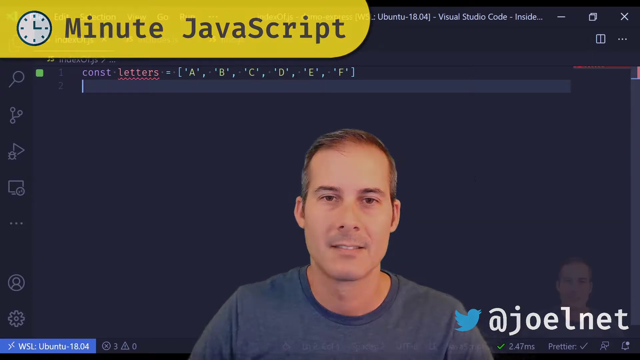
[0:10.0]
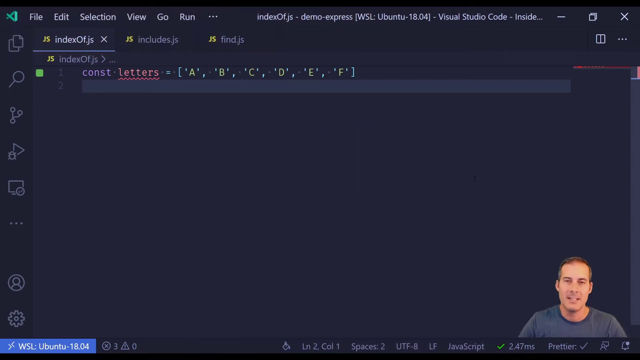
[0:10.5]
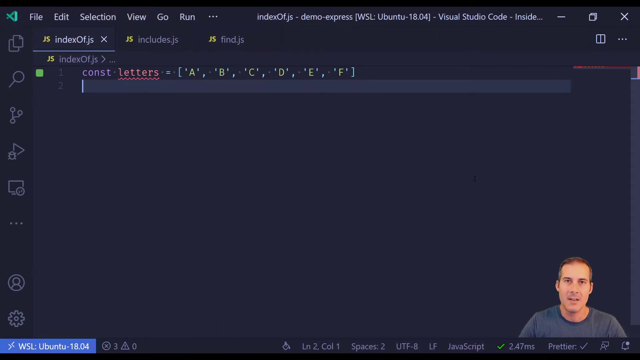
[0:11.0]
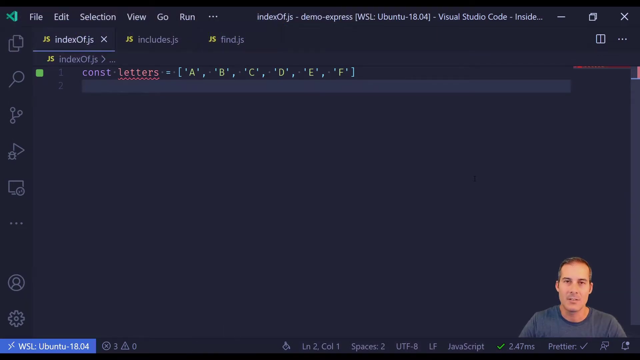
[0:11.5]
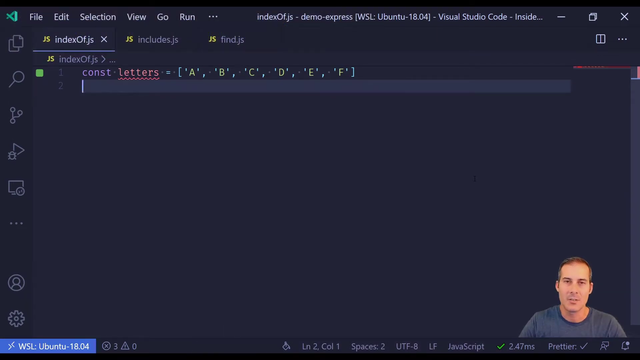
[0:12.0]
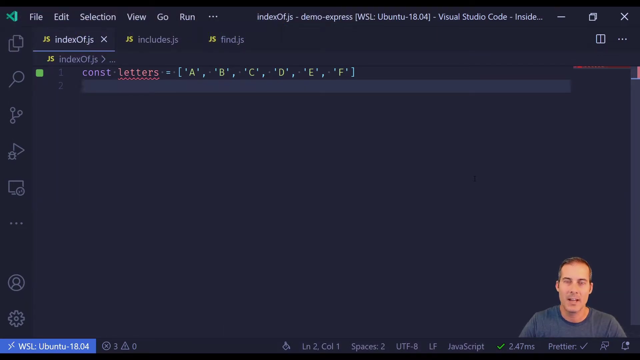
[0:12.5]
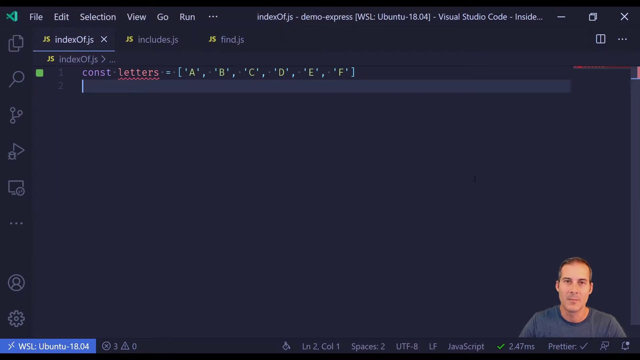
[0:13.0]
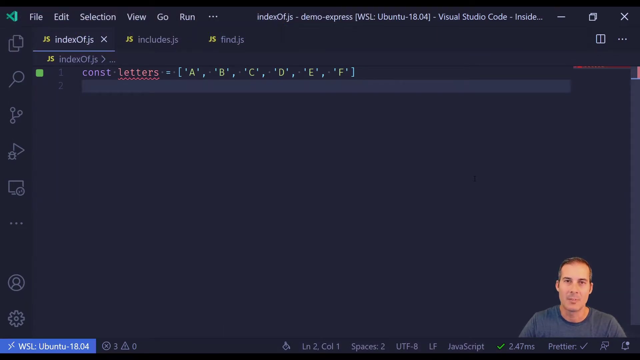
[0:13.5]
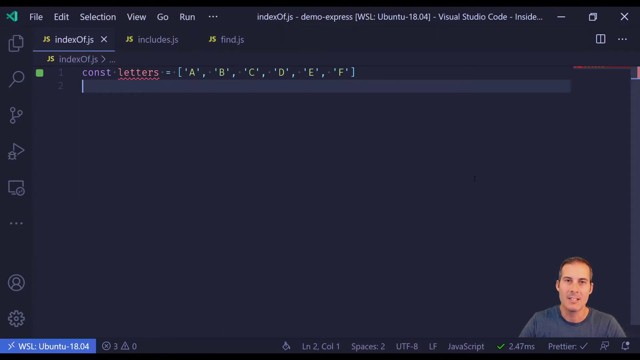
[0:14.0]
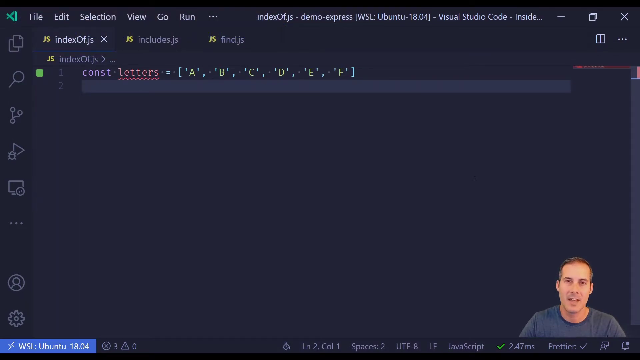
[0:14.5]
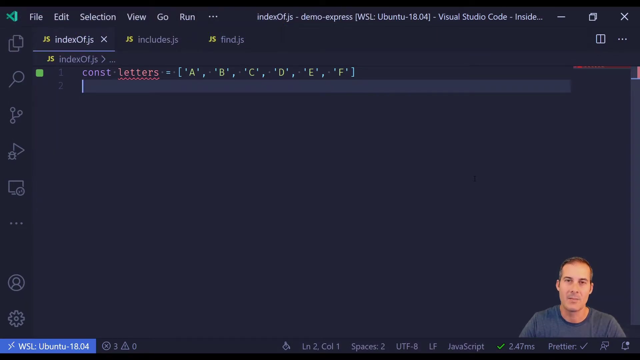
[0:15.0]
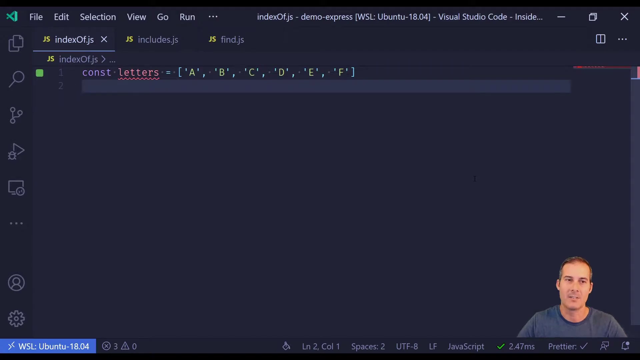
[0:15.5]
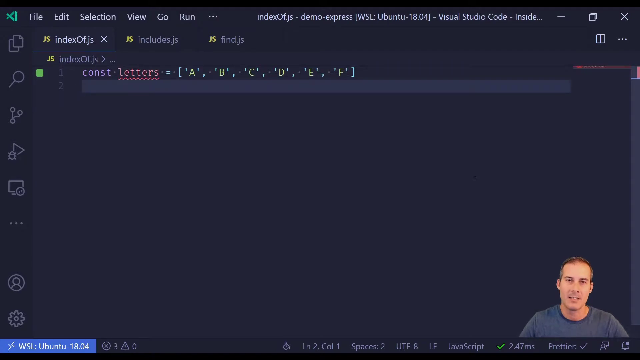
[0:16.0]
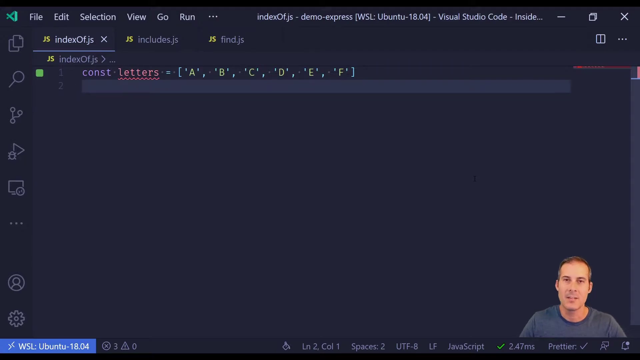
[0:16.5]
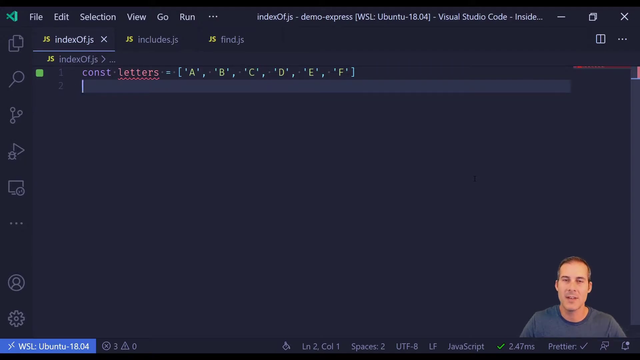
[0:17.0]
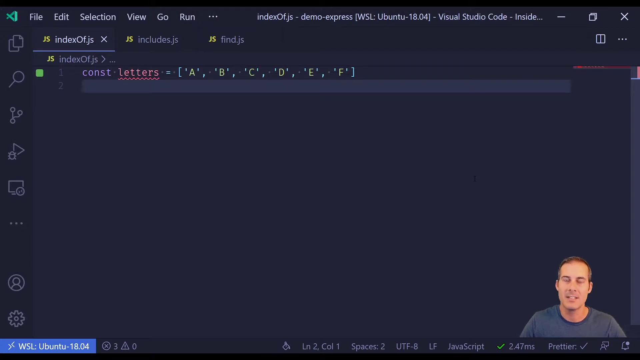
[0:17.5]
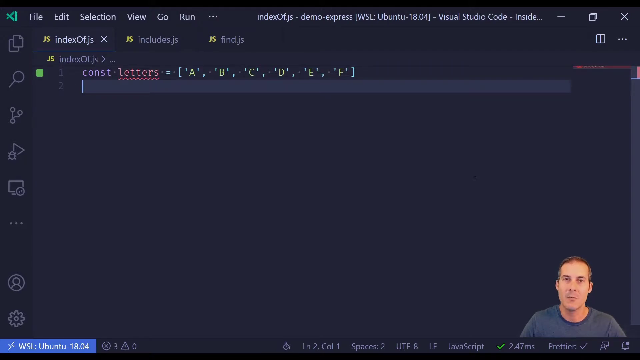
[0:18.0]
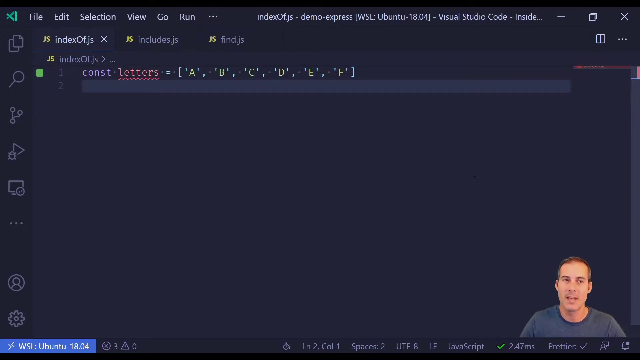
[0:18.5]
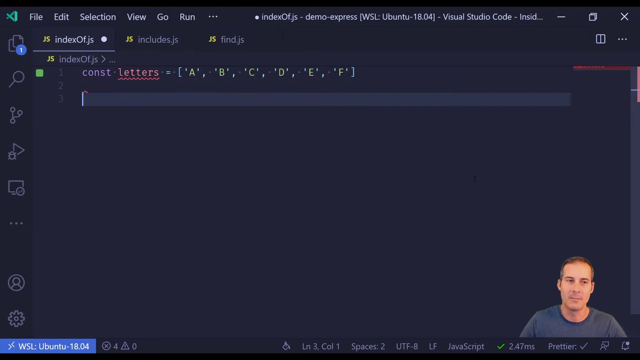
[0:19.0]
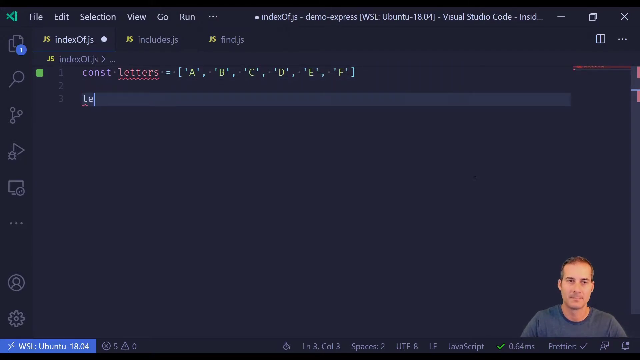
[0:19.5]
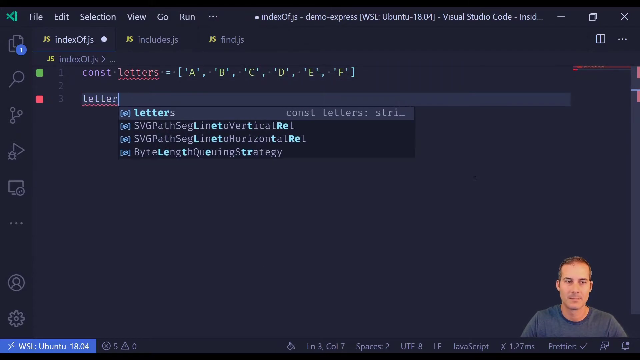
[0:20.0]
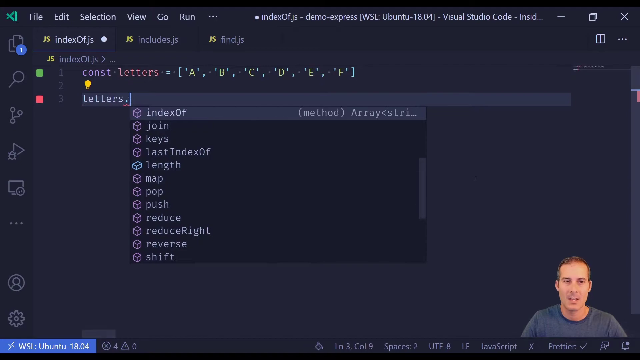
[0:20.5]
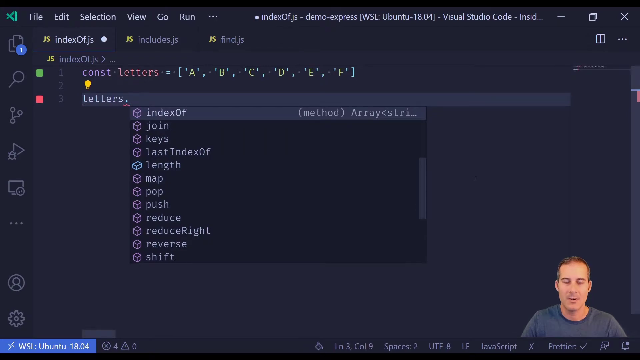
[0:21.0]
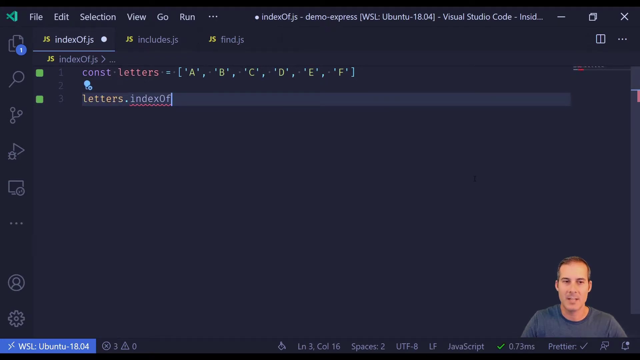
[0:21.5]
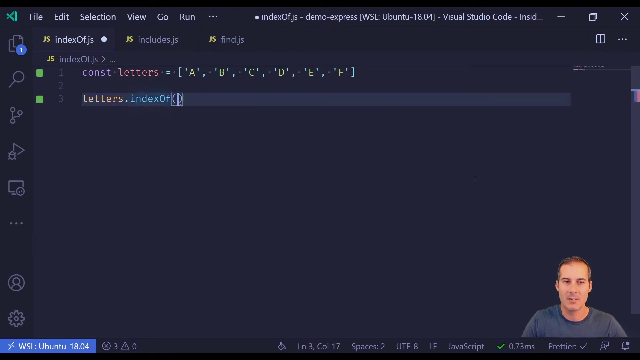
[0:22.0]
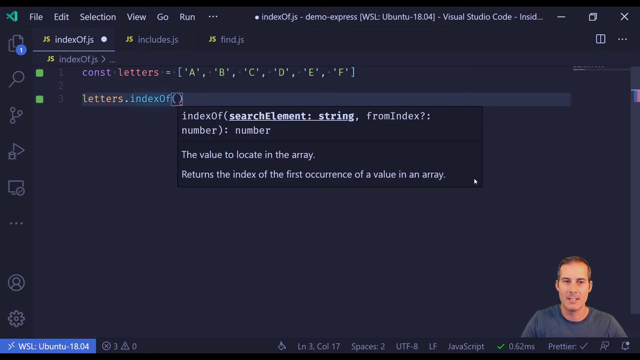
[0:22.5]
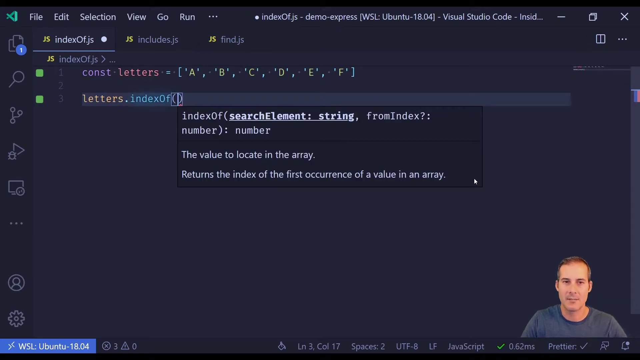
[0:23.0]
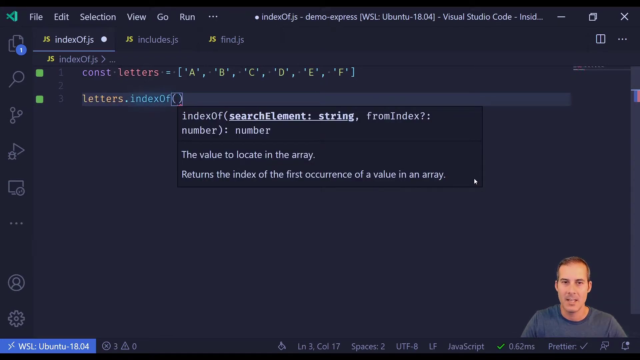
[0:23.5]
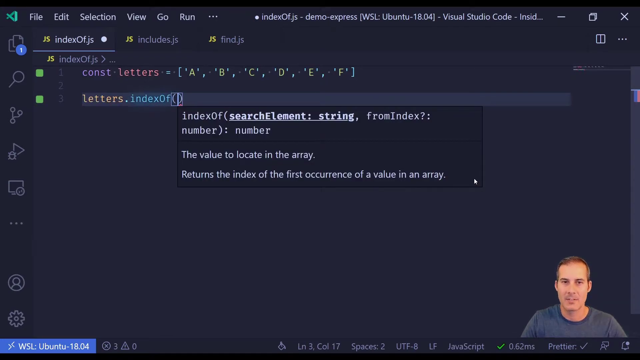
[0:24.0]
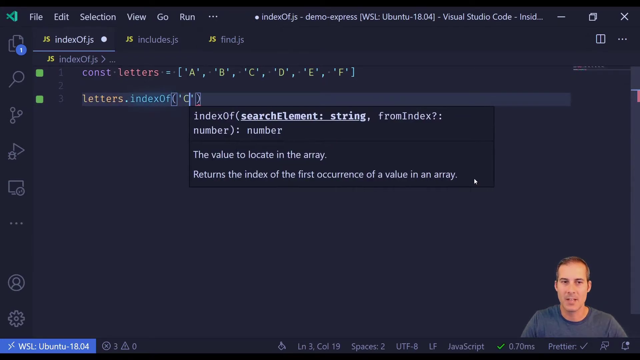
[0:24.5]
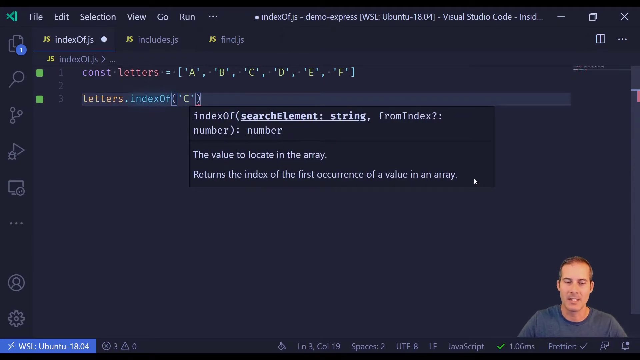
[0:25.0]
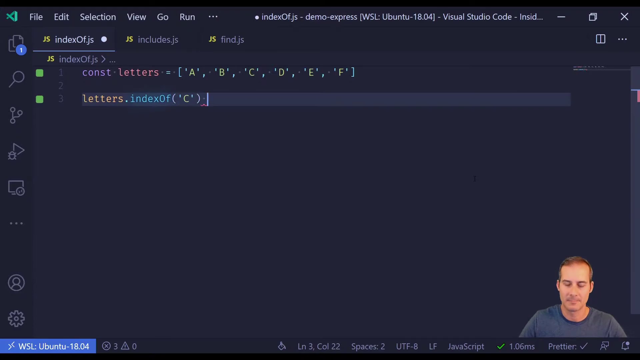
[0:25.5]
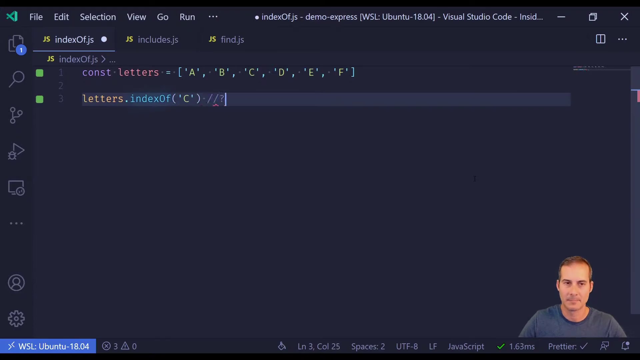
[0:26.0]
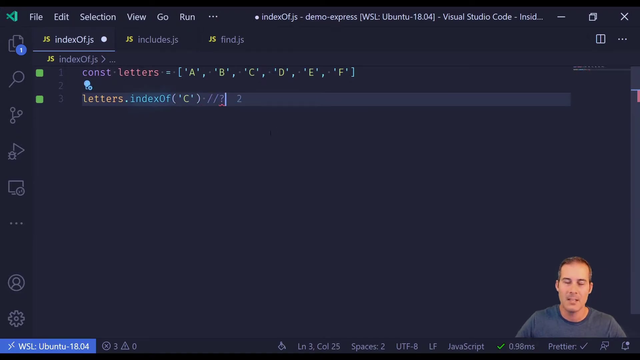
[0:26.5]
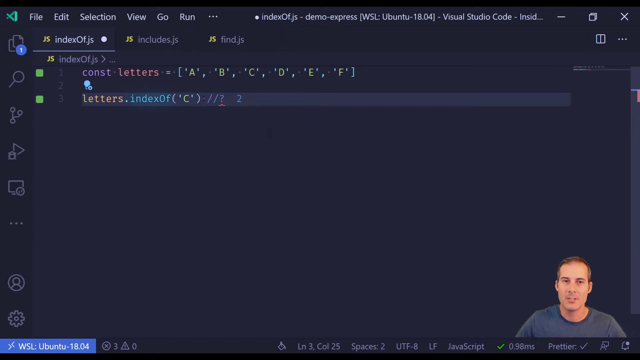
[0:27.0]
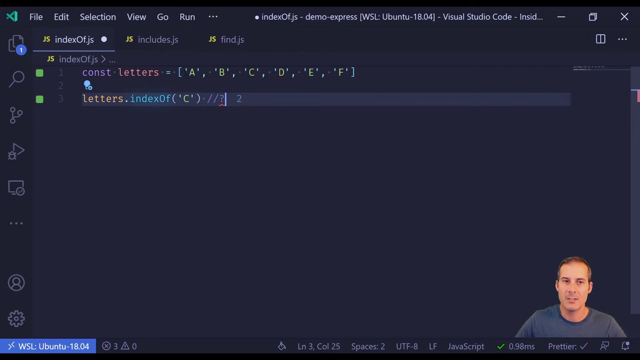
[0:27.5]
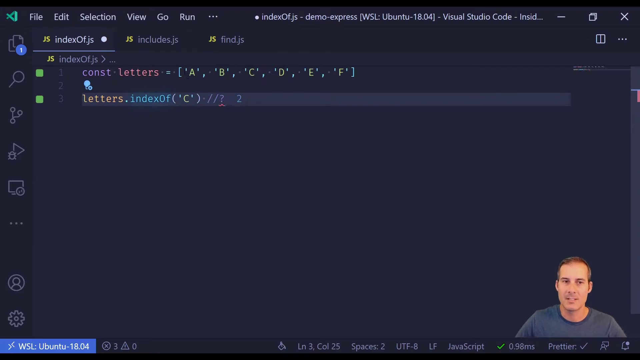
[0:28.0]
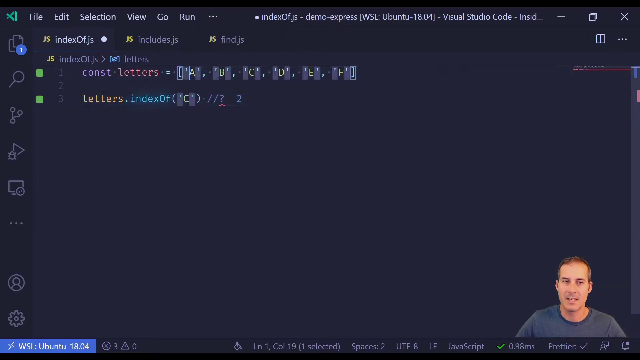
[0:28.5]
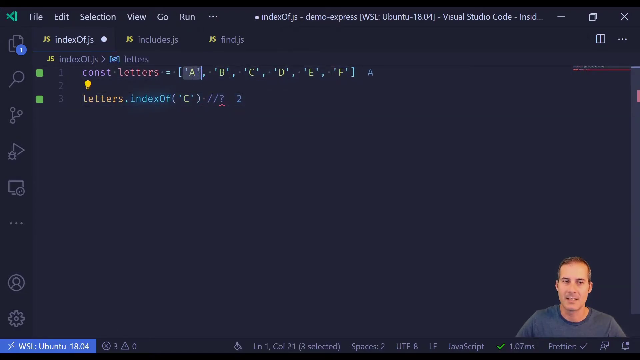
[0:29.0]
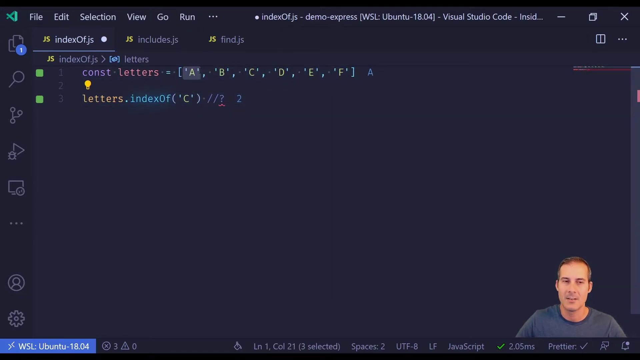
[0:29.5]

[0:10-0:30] The Minute JavaScript banner is in the top left corner: a little clock and a yellow banner that says "minute" and then "javascript". Joel starts in the center of the screen, then kind of moves to the right as the entire computer screen is shown. He gives a JavaScript lesson on the screen, typing out code for those following along, and as he types he appears in the bottom right corner.